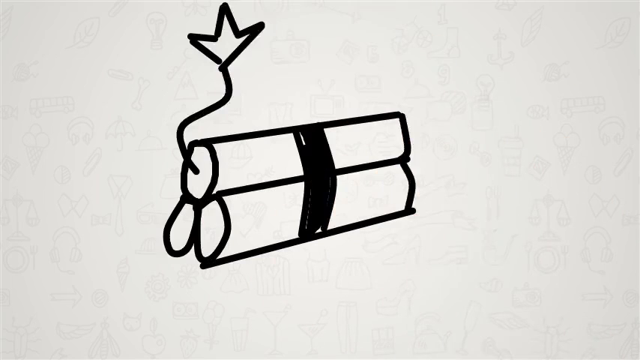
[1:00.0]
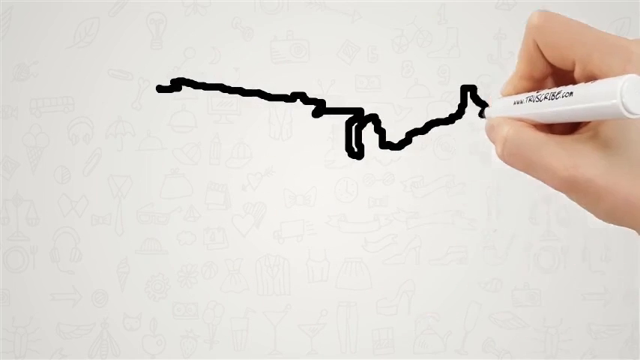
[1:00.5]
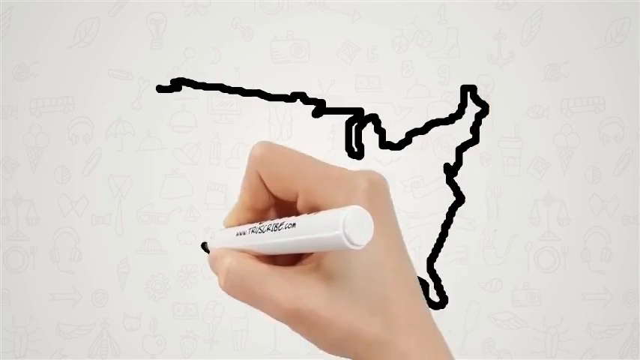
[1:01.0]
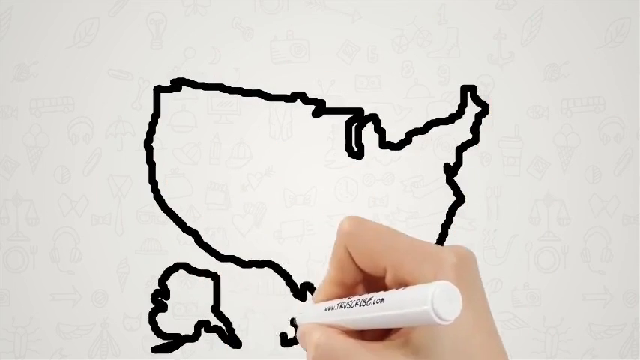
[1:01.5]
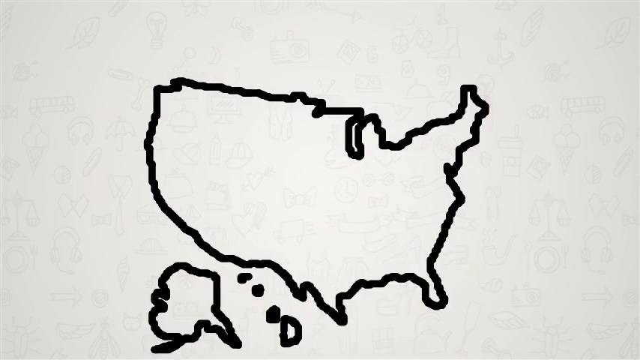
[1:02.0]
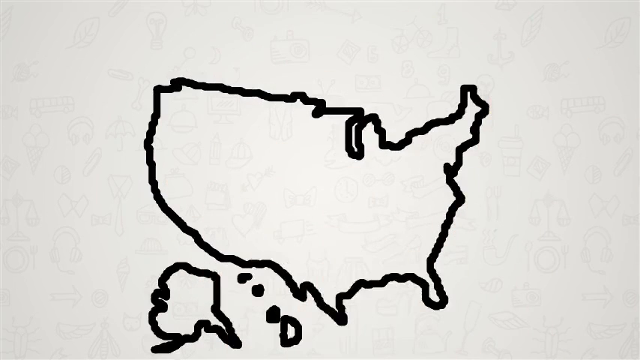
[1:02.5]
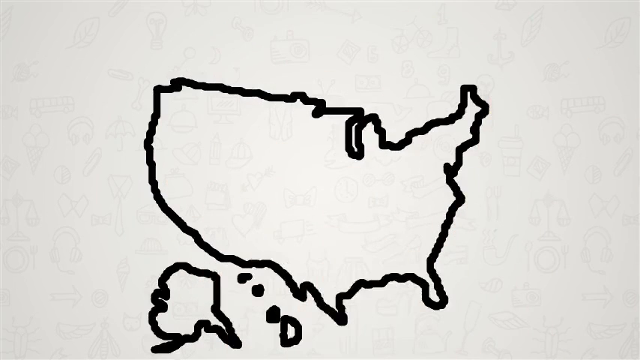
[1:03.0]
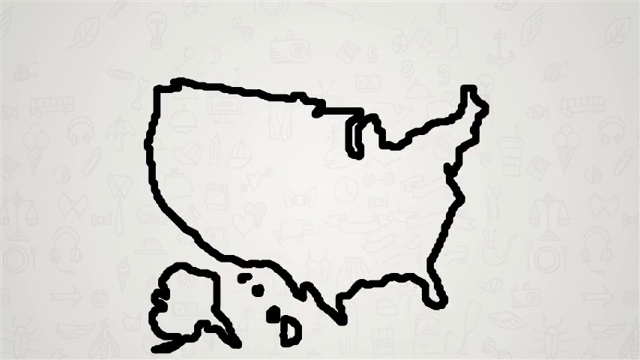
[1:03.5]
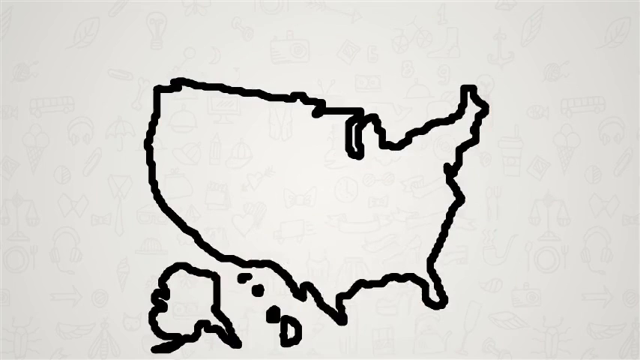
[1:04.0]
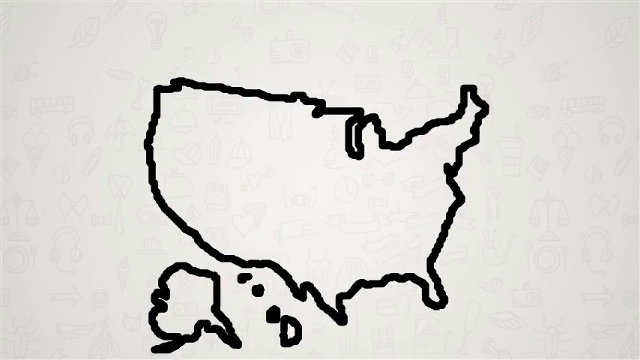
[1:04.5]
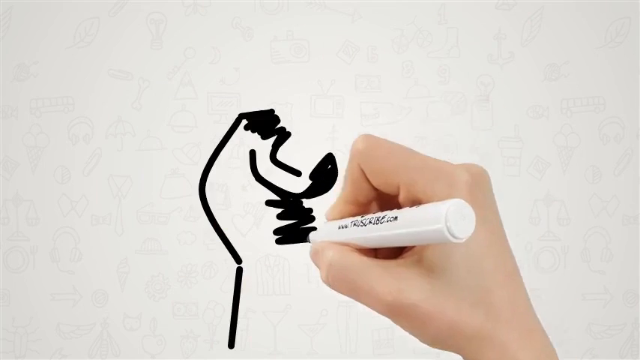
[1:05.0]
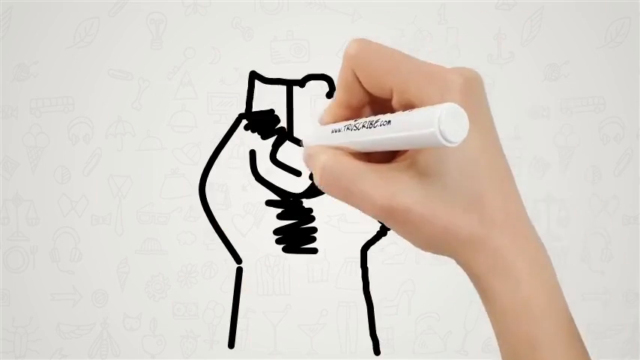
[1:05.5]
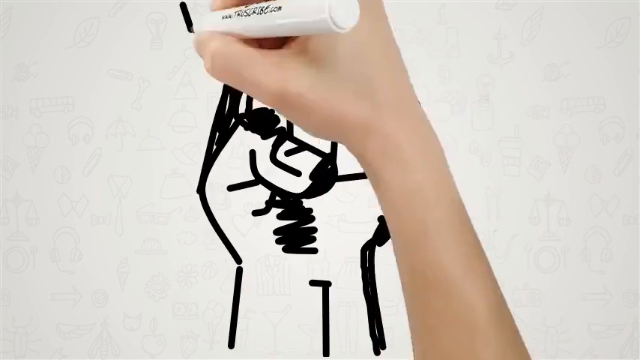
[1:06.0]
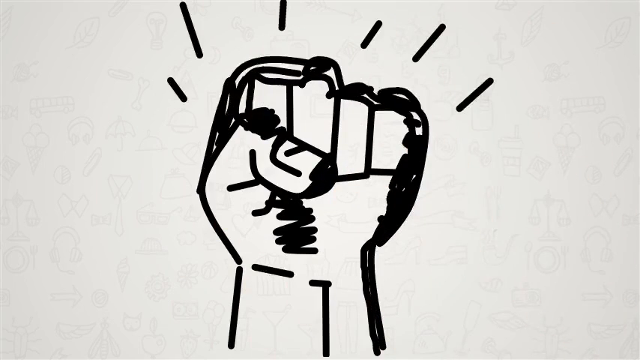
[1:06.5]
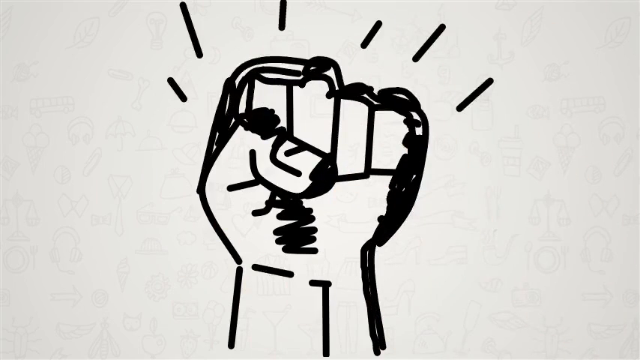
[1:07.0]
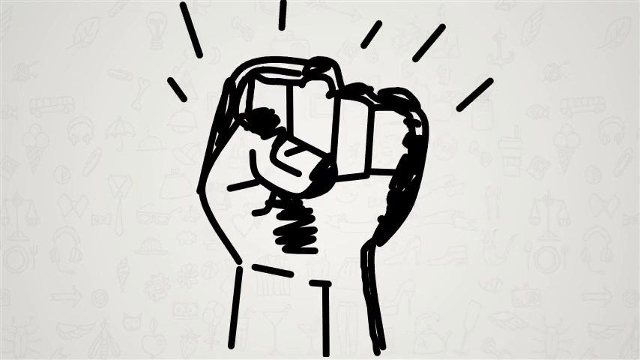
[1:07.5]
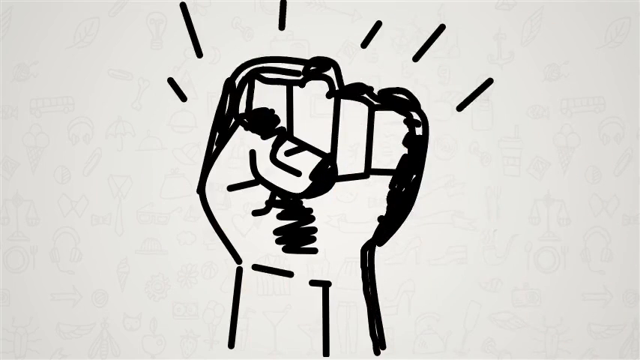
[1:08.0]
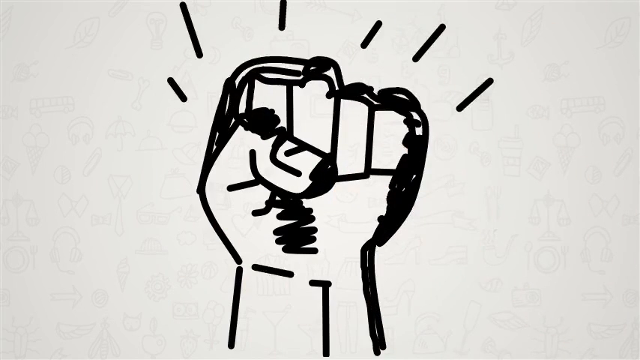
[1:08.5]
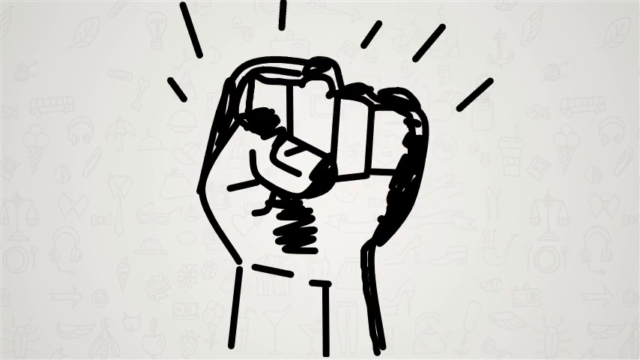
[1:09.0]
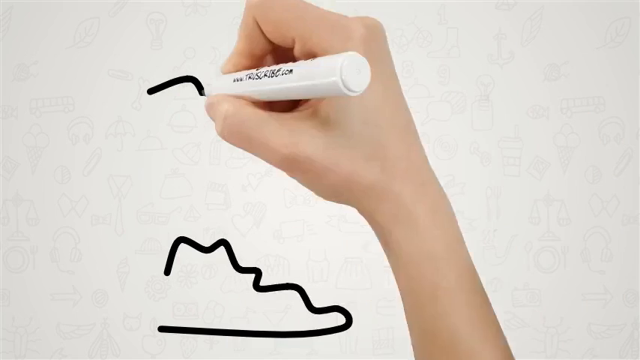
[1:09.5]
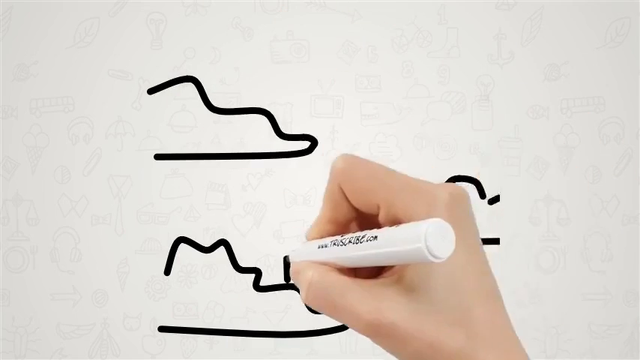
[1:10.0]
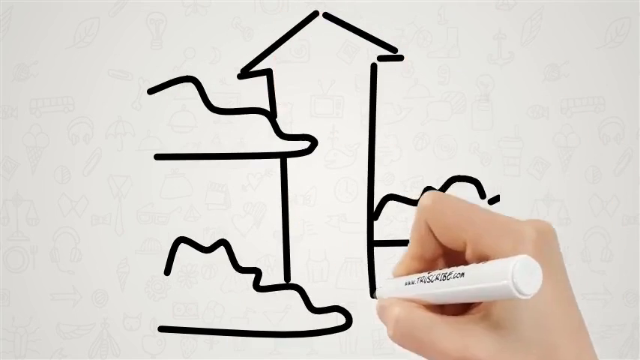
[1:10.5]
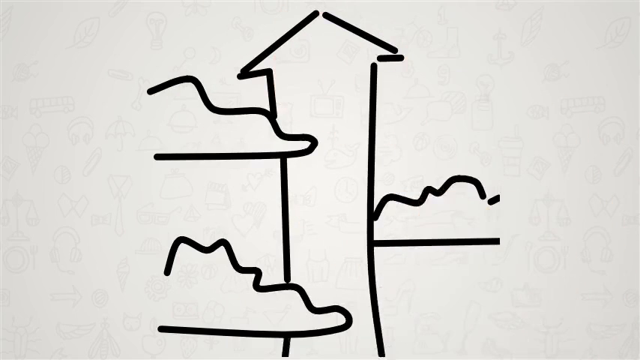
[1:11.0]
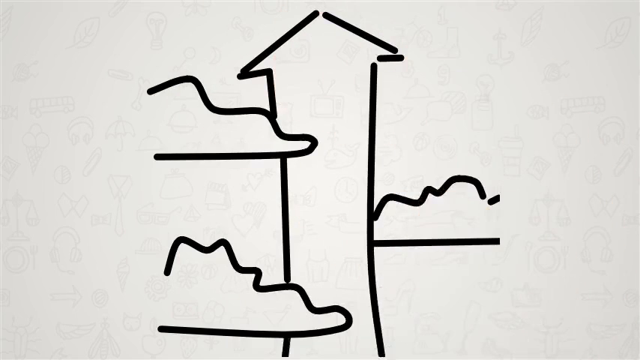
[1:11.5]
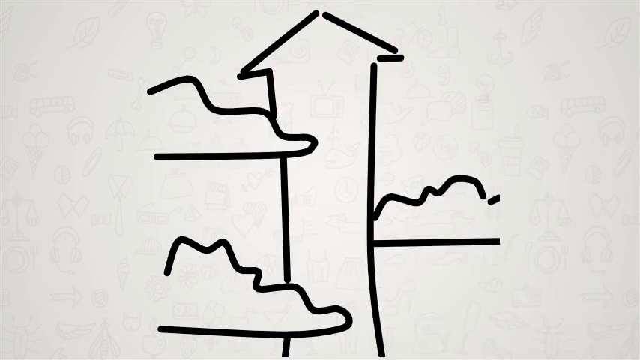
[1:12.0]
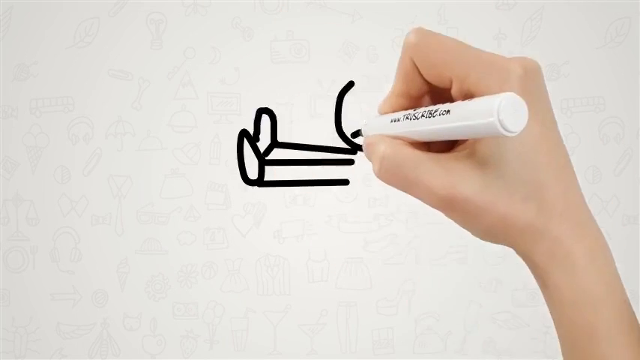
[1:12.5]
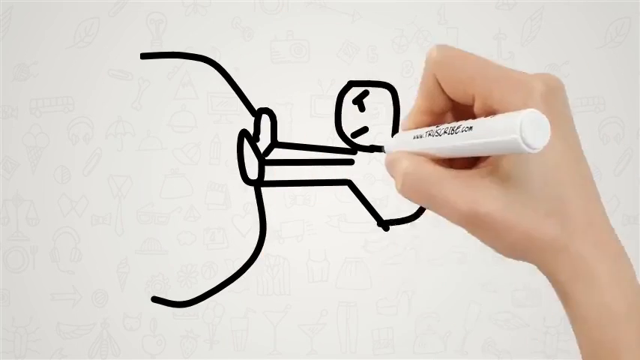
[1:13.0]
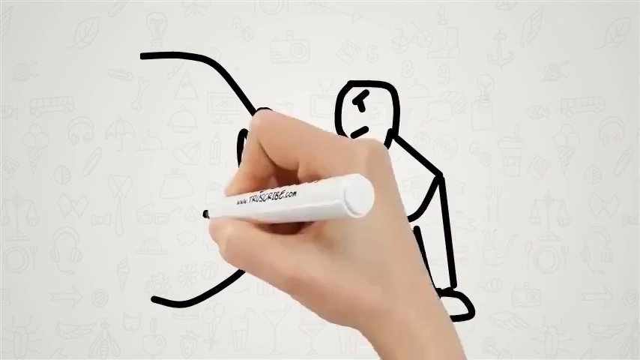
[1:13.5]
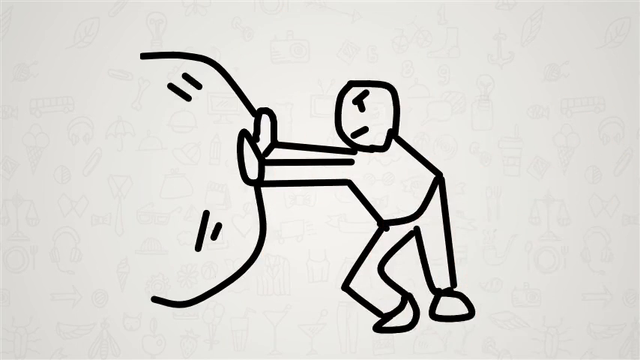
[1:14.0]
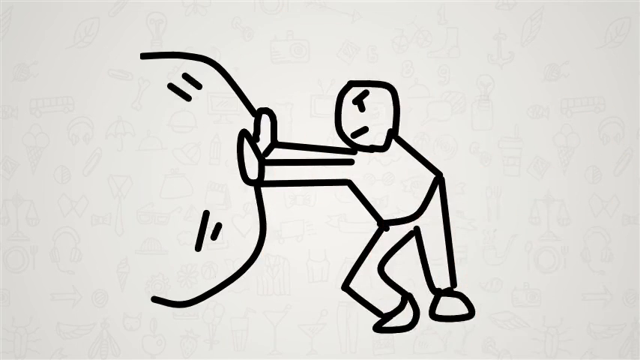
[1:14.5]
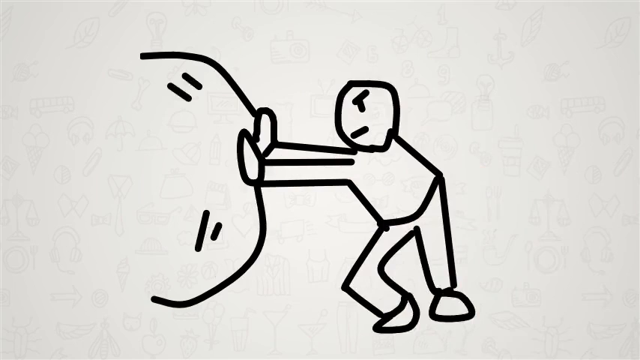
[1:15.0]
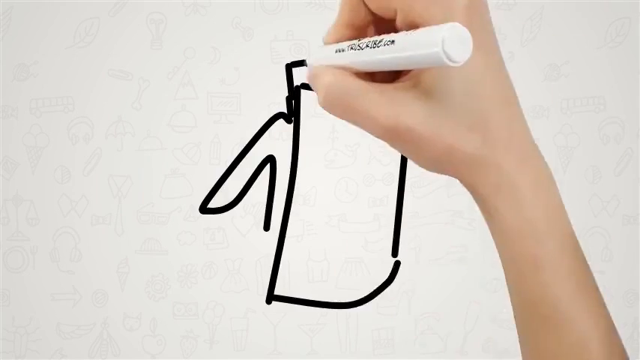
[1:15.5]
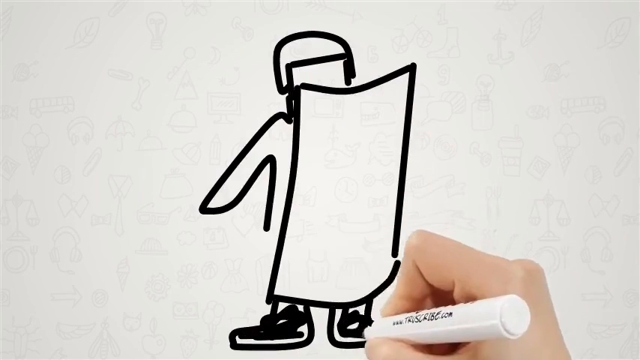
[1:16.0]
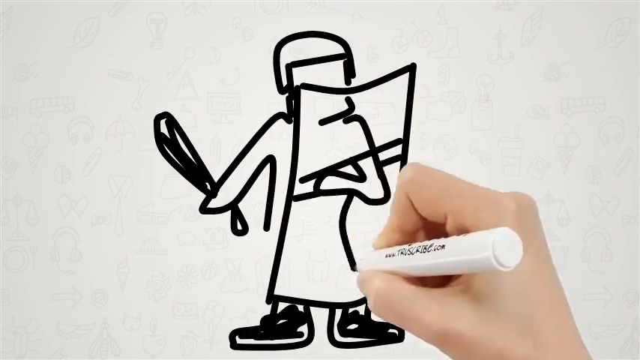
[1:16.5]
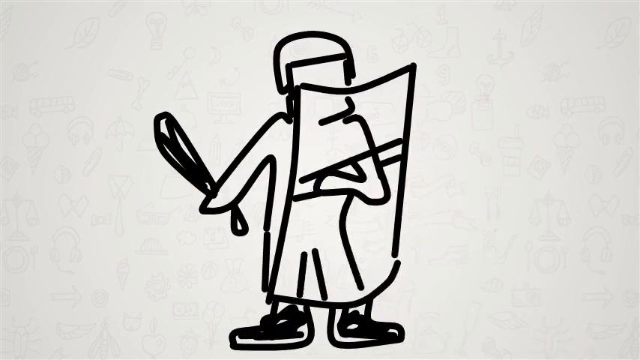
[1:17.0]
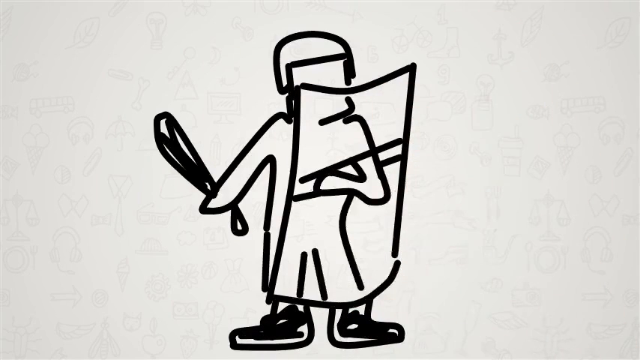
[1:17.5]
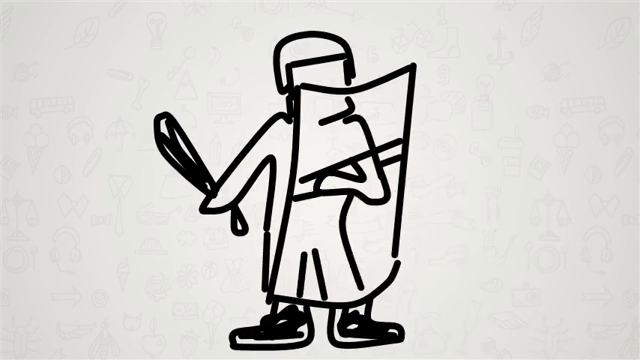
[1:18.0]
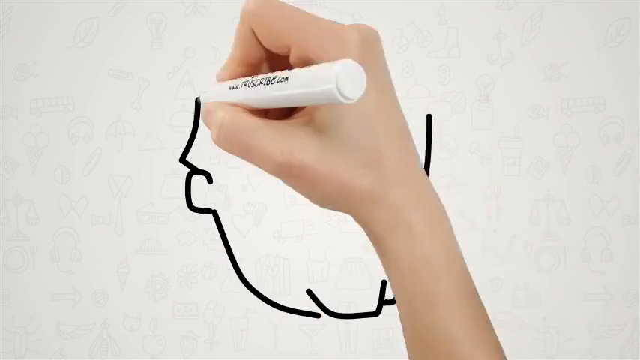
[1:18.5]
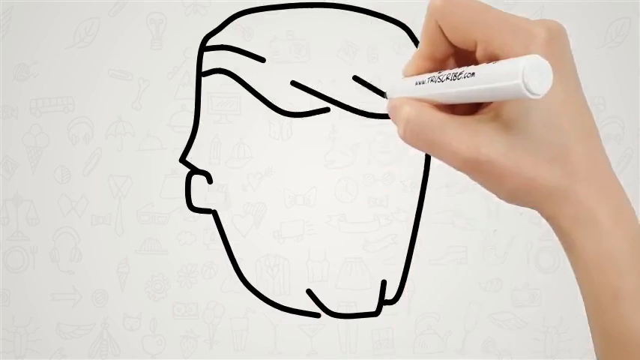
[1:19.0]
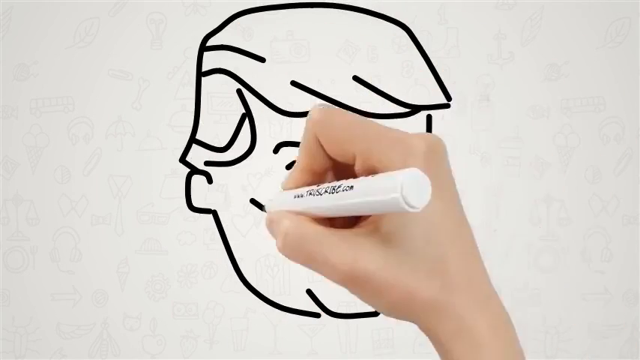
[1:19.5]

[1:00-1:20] On a white background, a white person's hand and part of their arm hold a white pen with black writing on it and black ink, drawing various items in black. Each drawing disappears after being drawn and is replaced by the next. The first is three sticks of dynamite laying on the floor, held together by a black band wrapped around them, with a piece of string on the one on top. Two sticks are side by side on the bottom and one stick is above them in a sort of triangular shape; the top stick has a line coming out of it with what looks to be the top part of a star with three points, representing a spark. Next is a drawing that appears to be the USA: a large landmass in the centre, a smaller landmass in black in the bottom left-hand corner, and just to the side of that, beneath the main landmass, three dots and a tiny circle at the bottom; it looks like some sort of landmass, possibly the United States. Then comes a clenched fist with six lines coming out from the top of it and black shading around the outside; the thumb with its nail is visible in front of four clenched fingers. The fist is white with black shading around it. Next is a drawing of what looks like two clouds, one above the other on the left, cut off at the side, and a single cloud on the right-hand side. In the centre, going behind the clouds, is an arrow pointing upwards, a rectangle shape rising into a point, outlined in black with white inside.